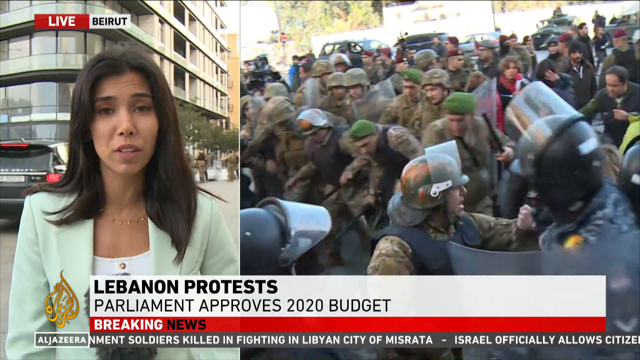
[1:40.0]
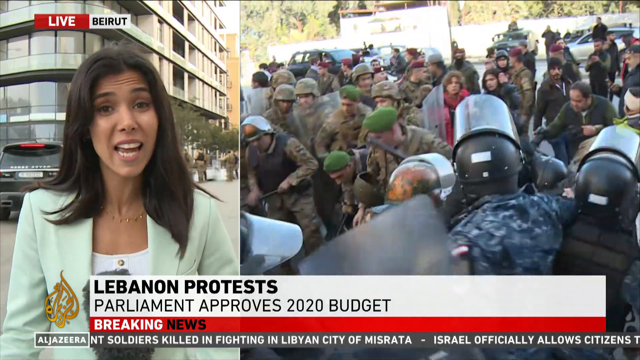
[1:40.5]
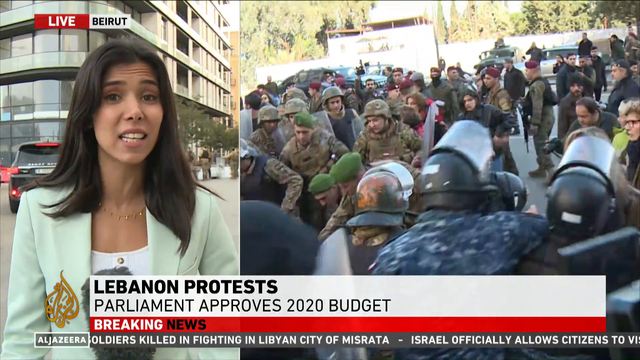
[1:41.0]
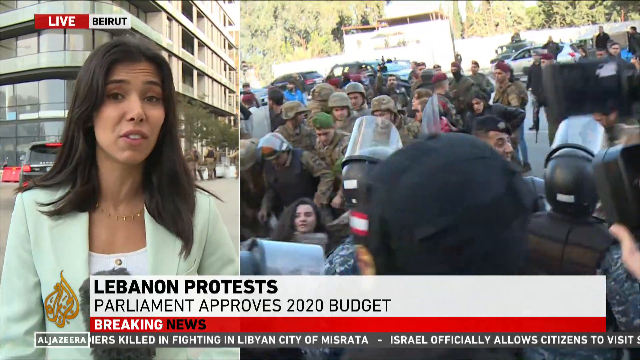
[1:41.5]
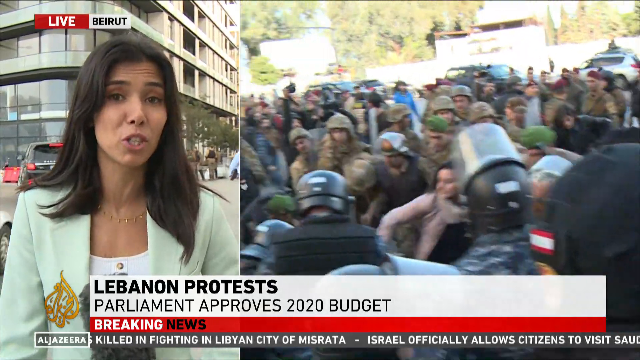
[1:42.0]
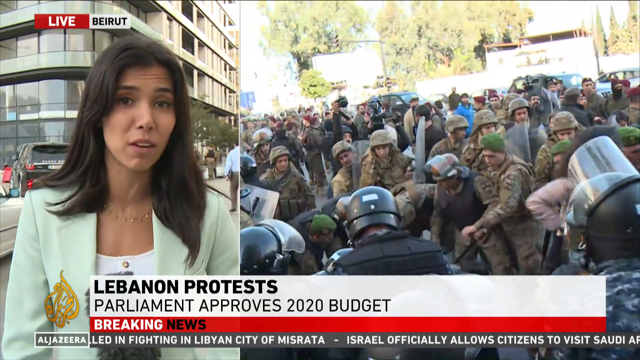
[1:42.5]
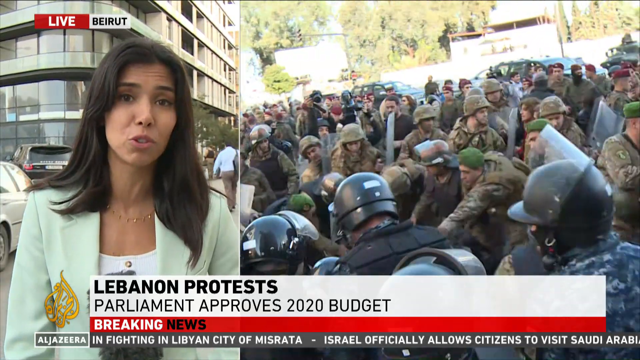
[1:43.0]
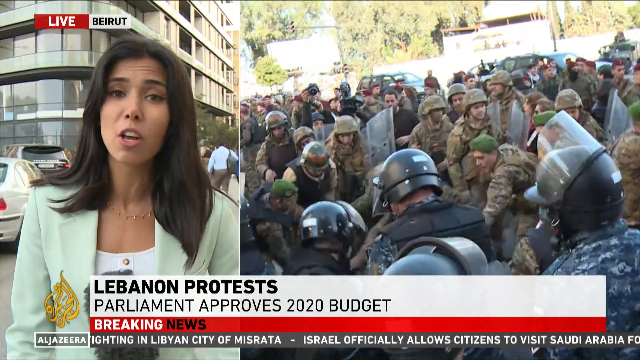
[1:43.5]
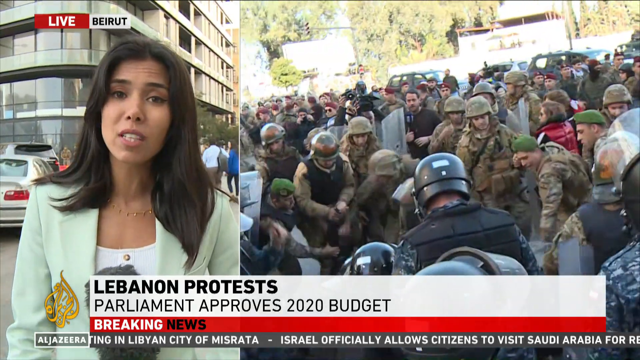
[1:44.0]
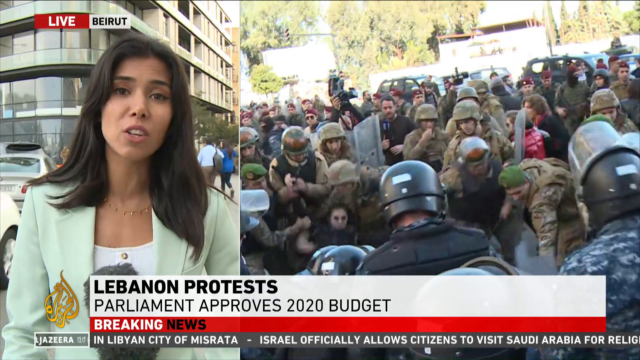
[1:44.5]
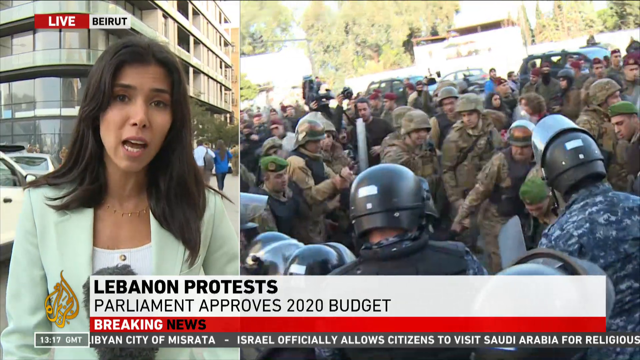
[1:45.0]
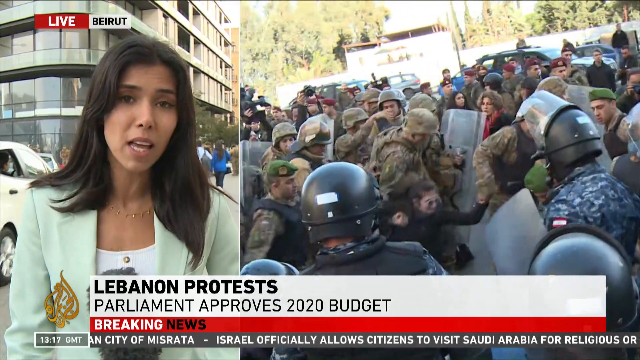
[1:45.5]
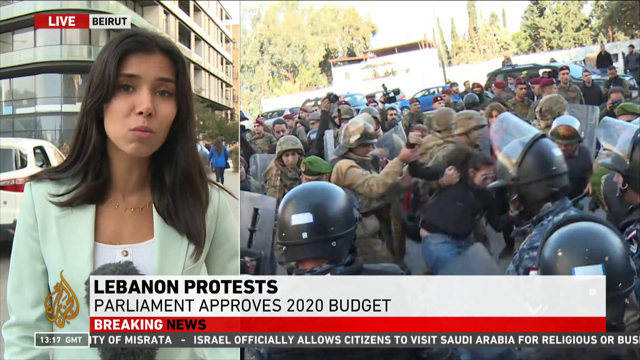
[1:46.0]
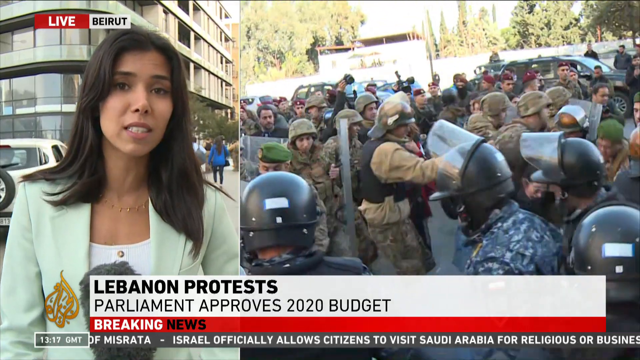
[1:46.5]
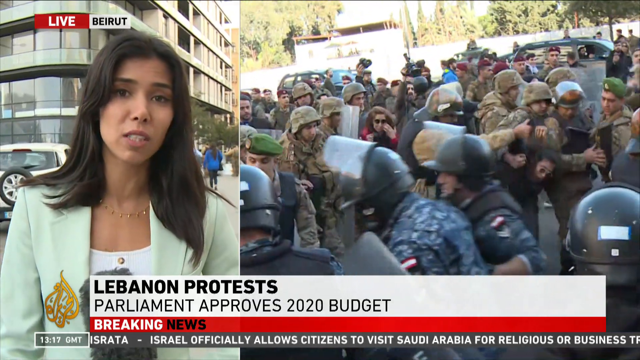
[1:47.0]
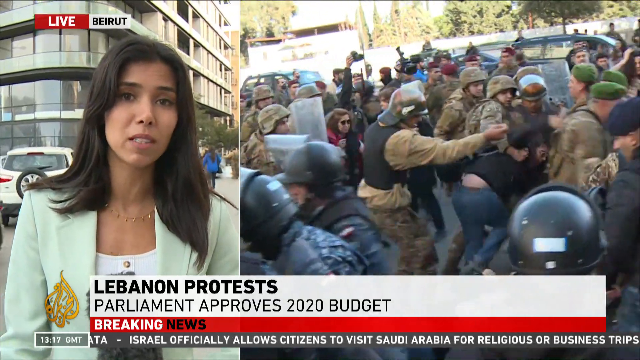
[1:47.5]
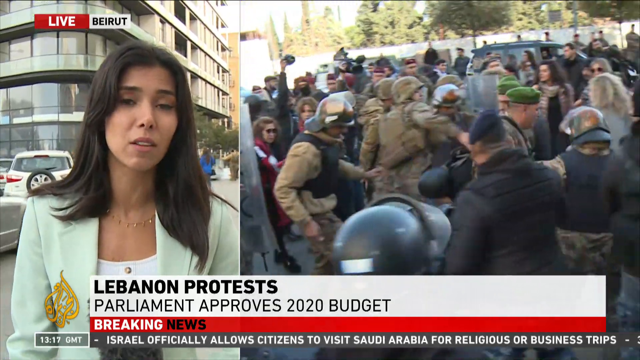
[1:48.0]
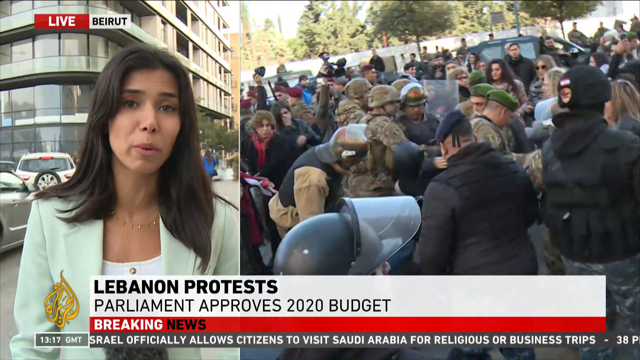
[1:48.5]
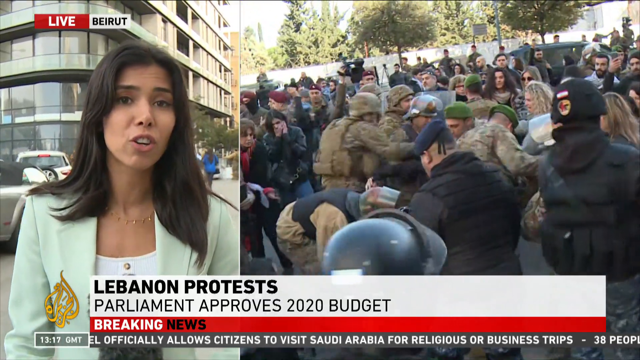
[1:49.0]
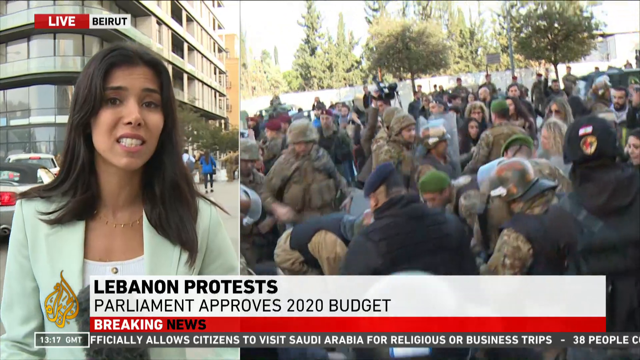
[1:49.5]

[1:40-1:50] The reporter continues alongside scenes of the protest. Police officers drag protesters across the protest area, apparently trying to break up or stop the protest. Five police officers pull one protester away, and once they have pulled him away they seem to retreat back to a starting point. Police officers in riot gear hold their riot shields up. No projectiles are being thrown. Cars are moving and driving past the scene, so the protesters are not obstructing traffic.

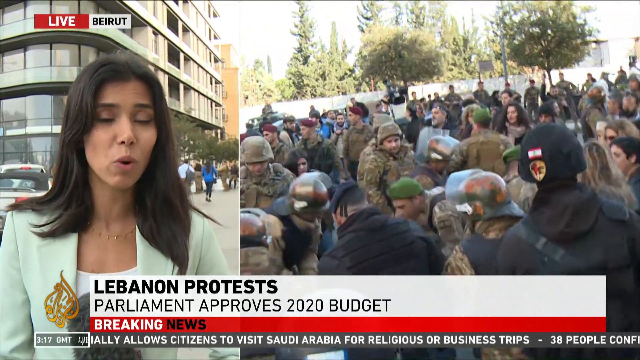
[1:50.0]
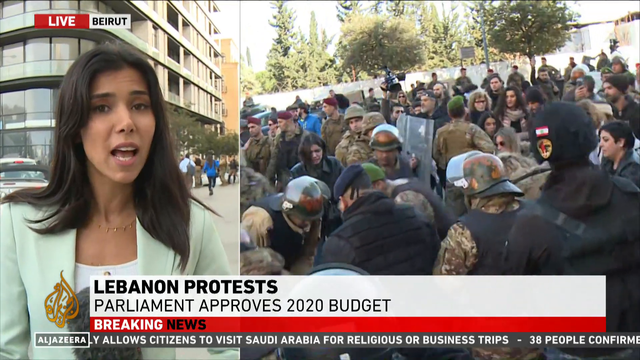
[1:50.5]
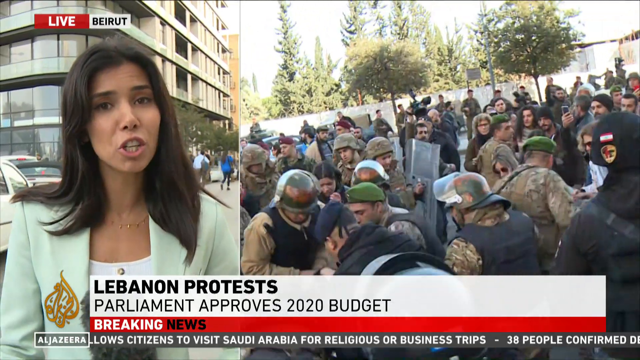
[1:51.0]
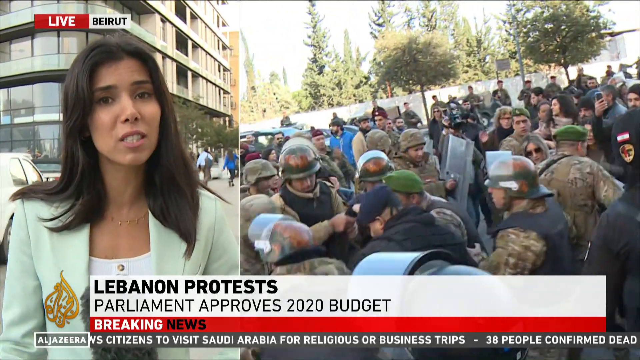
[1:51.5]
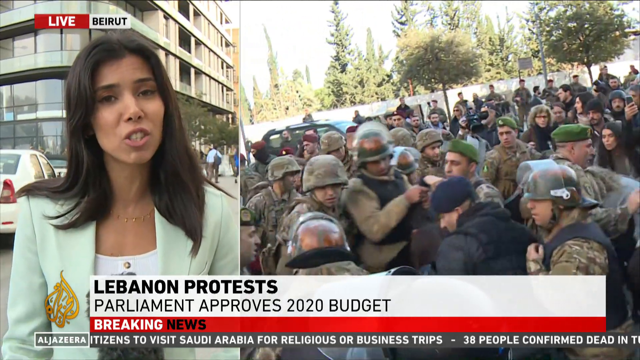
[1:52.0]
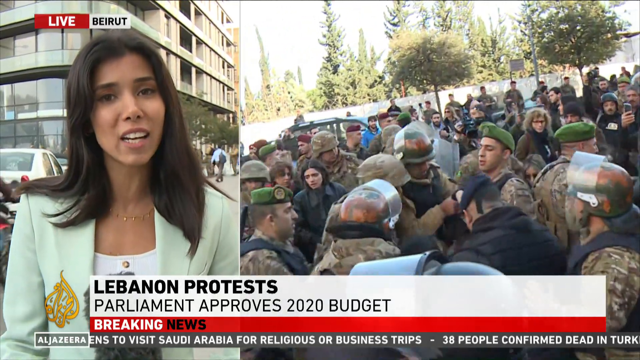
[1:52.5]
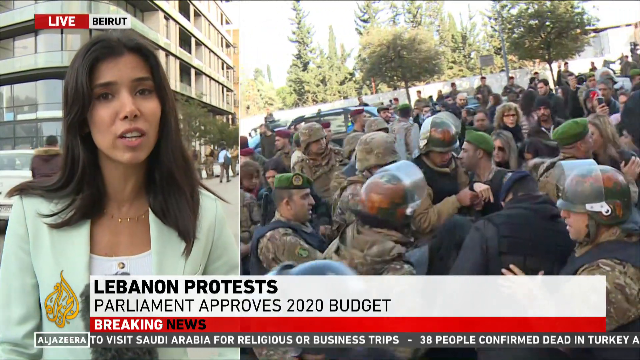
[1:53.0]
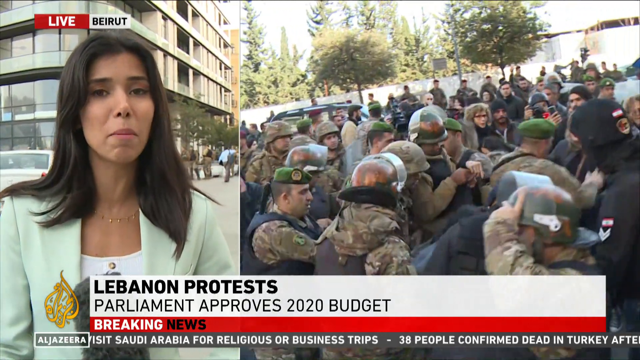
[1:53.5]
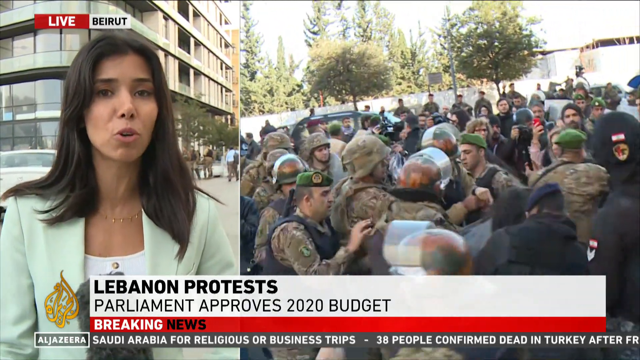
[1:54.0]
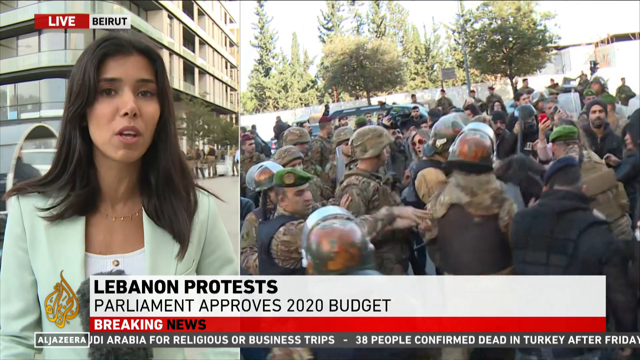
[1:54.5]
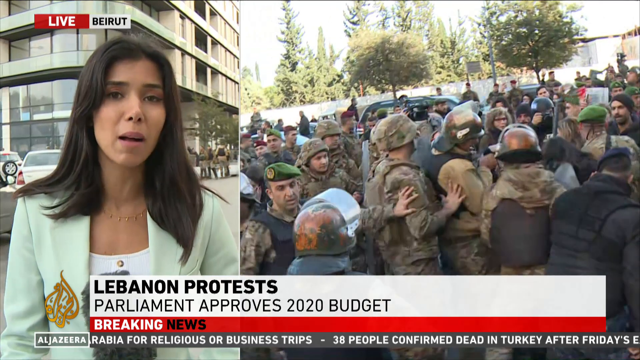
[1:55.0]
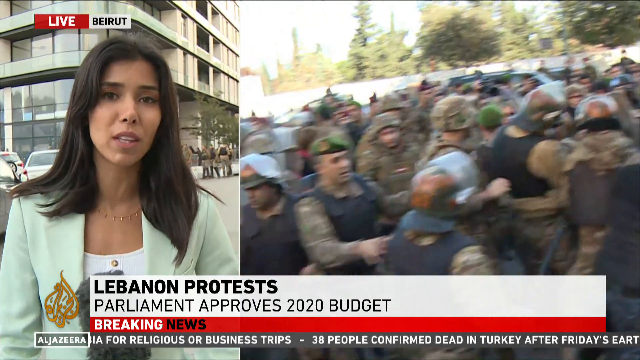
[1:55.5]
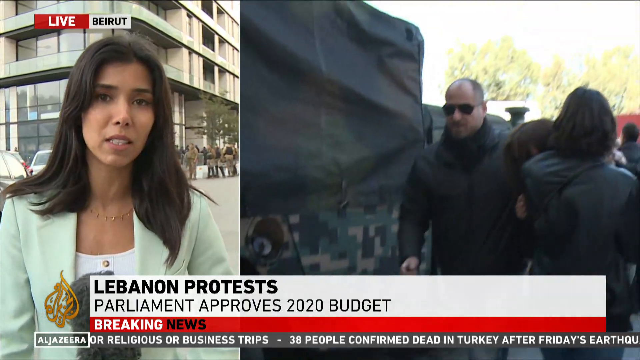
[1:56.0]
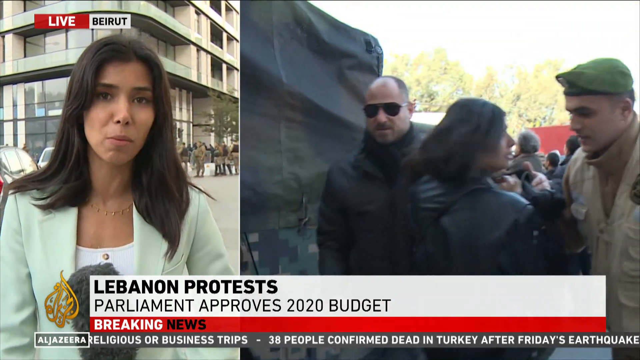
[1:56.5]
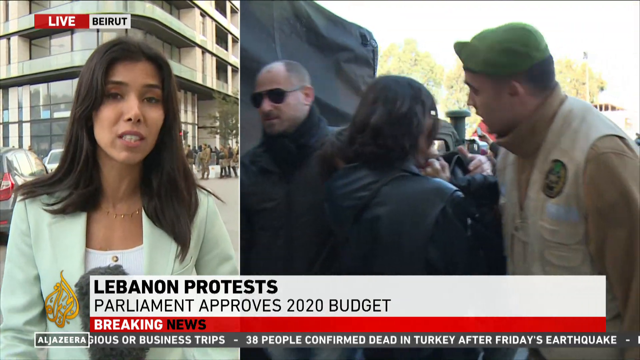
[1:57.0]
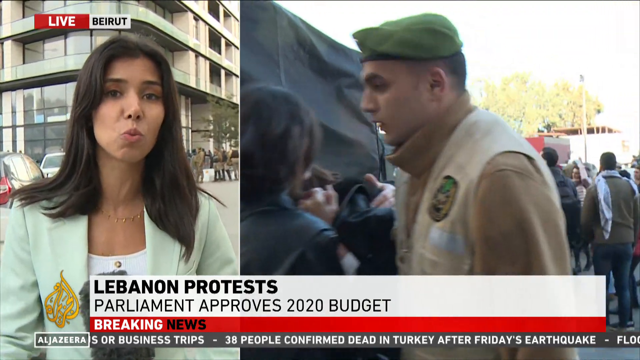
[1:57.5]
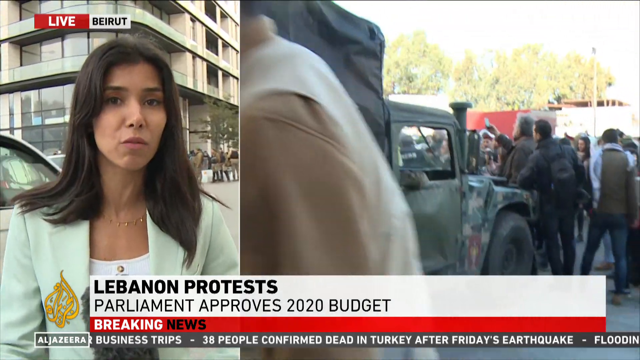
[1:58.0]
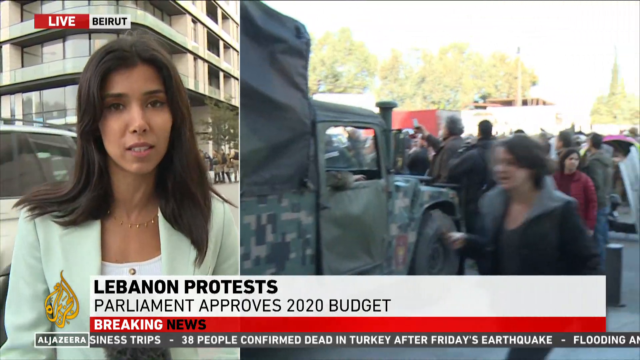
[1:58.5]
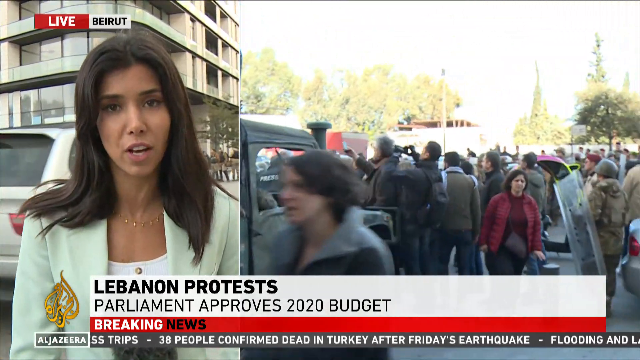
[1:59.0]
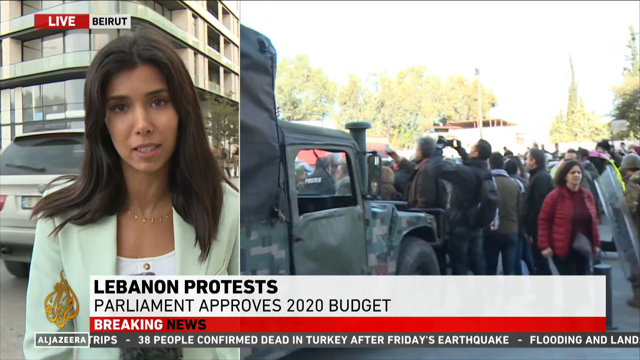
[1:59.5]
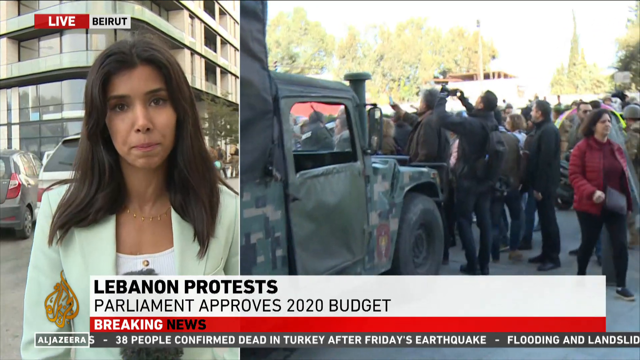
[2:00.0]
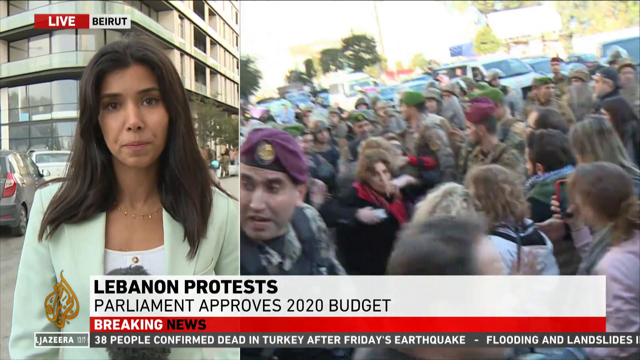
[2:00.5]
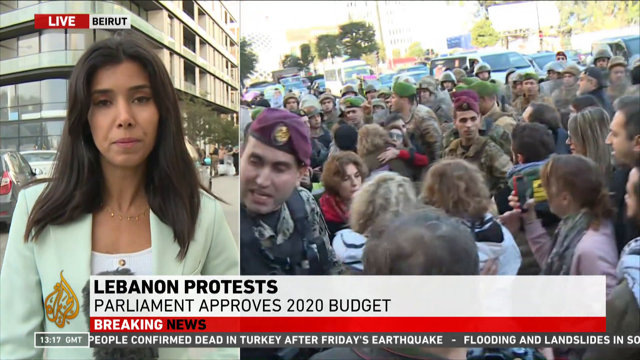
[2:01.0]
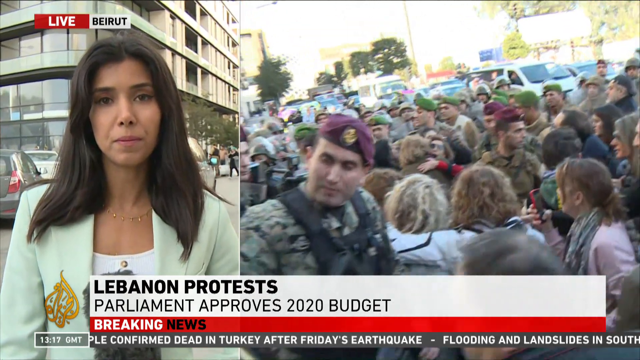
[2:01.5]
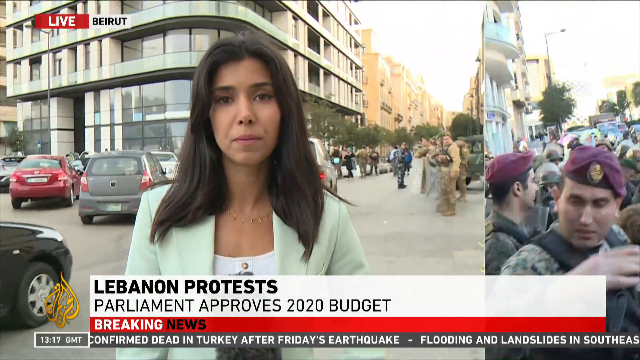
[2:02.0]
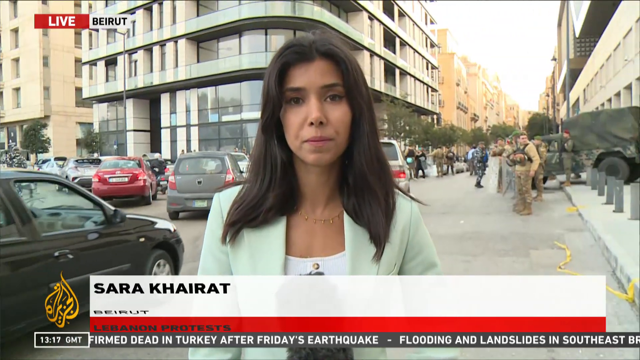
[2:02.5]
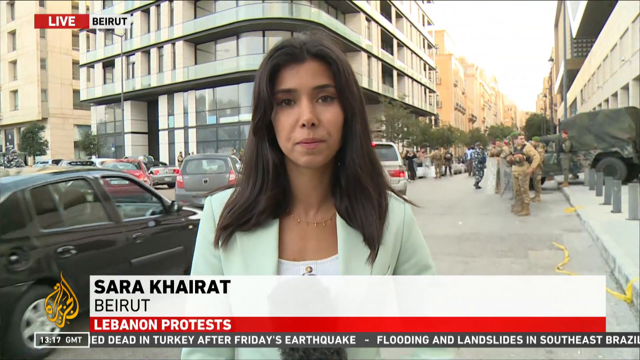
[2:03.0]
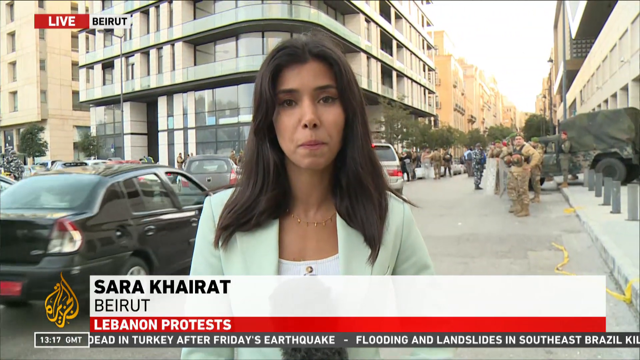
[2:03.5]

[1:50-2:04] The reporter is still reporting, and the split screen now shows a close-up of the protesters. The screen then switches from the split screen to a single view. A woman in a black leather jacket, seen earlier, is with a man and a soldier who appears to be removing her or perhaps protecting her. There are many protesters and much chaos, with protesters mixed in among the soldiers and police officers, in what appears to be some form of outbreak. She holds onto someone as they retreat behind a military vehicle.